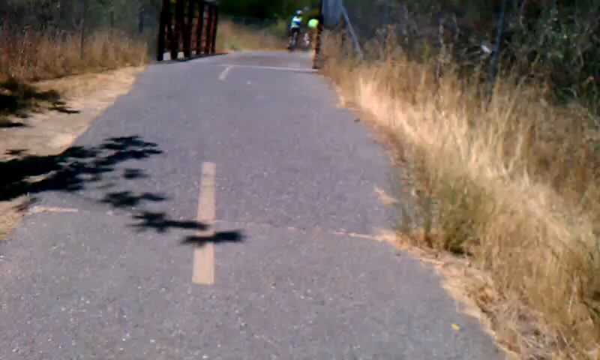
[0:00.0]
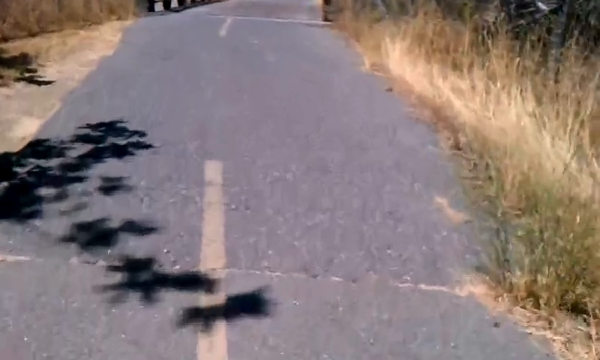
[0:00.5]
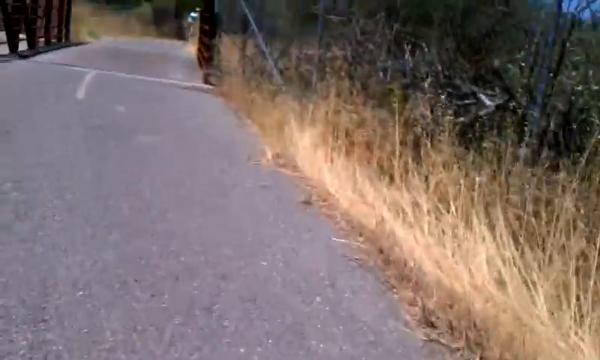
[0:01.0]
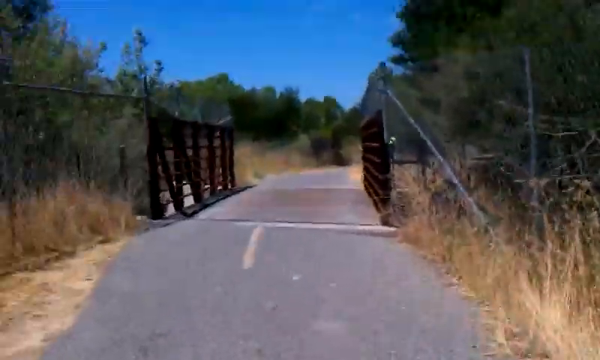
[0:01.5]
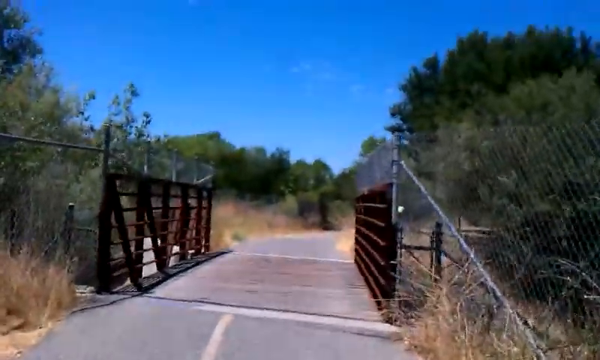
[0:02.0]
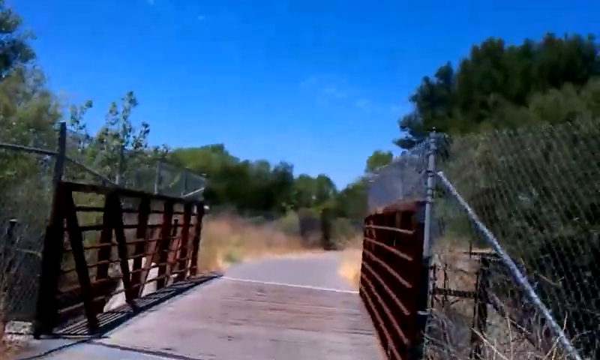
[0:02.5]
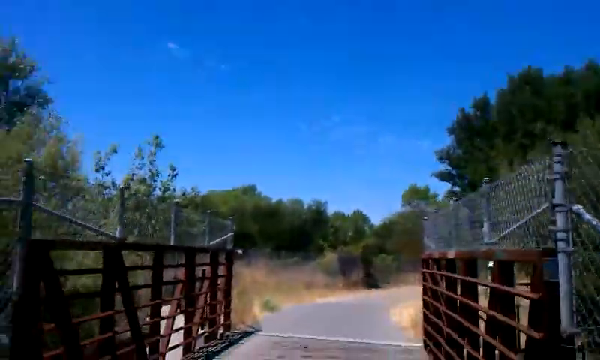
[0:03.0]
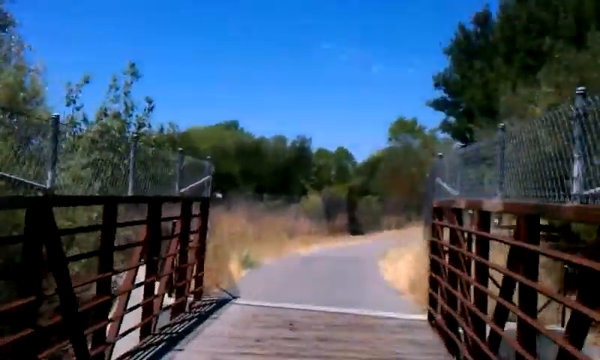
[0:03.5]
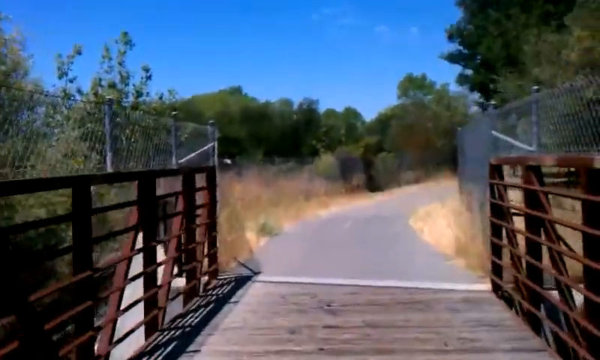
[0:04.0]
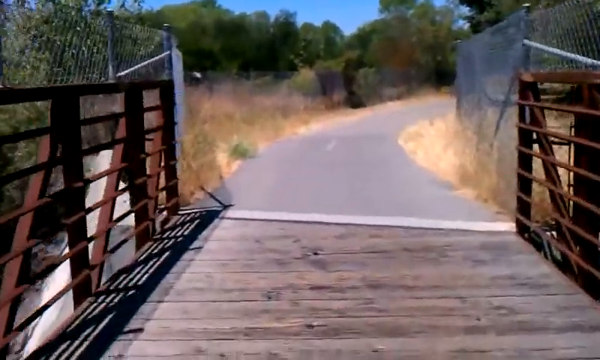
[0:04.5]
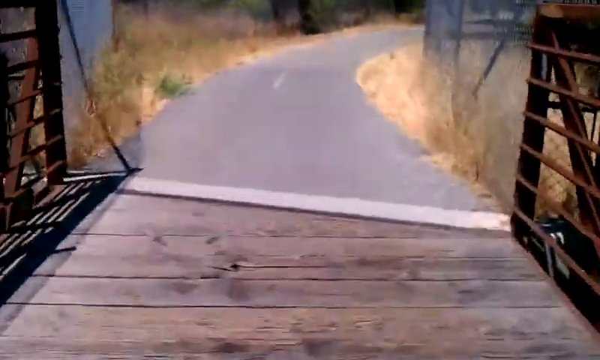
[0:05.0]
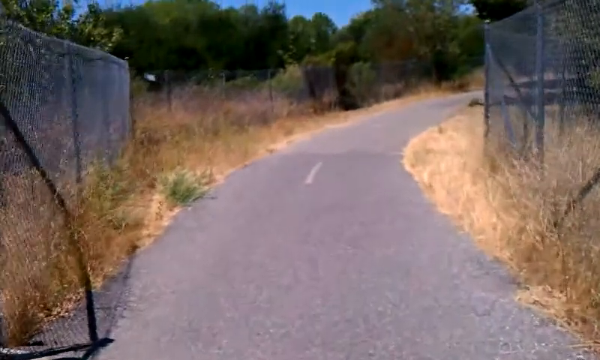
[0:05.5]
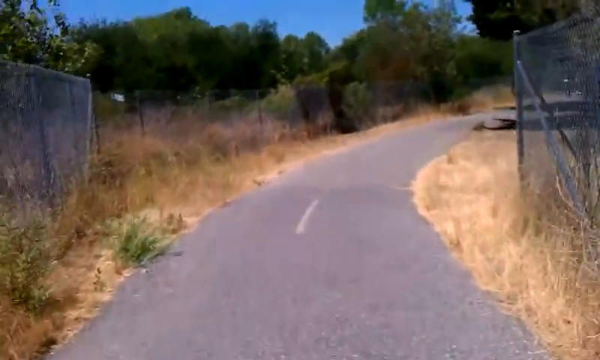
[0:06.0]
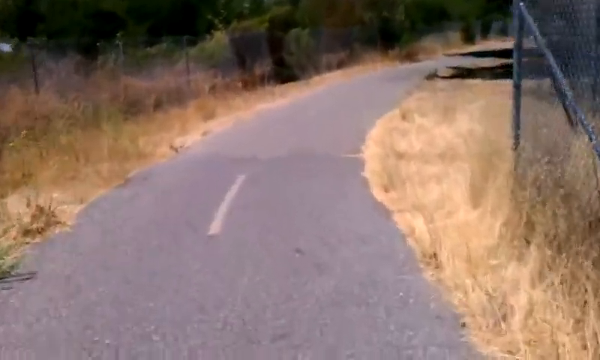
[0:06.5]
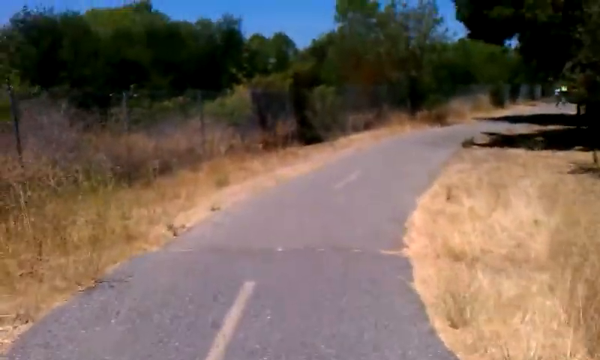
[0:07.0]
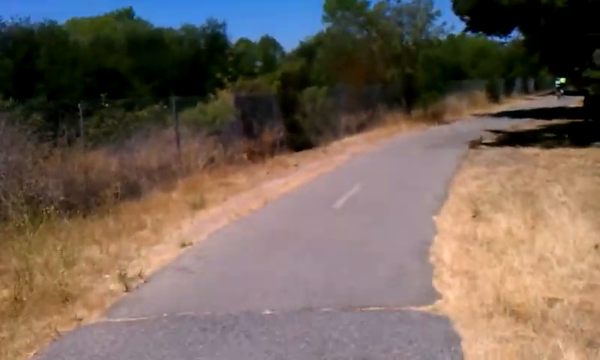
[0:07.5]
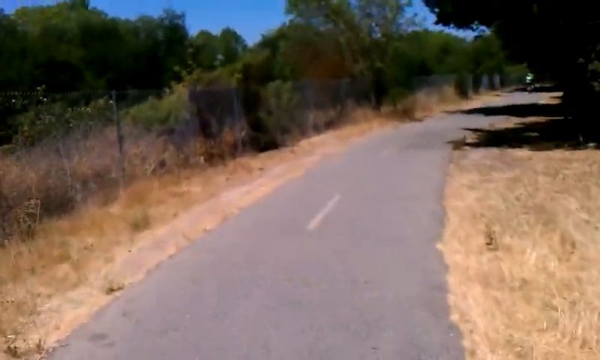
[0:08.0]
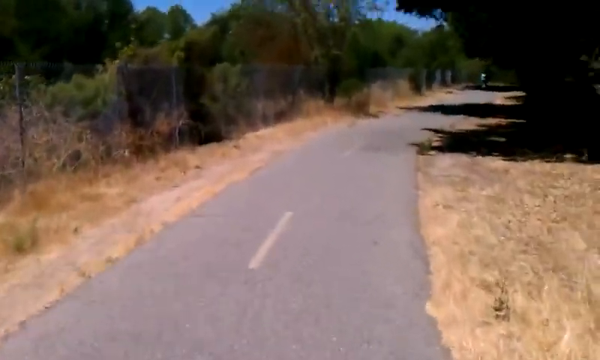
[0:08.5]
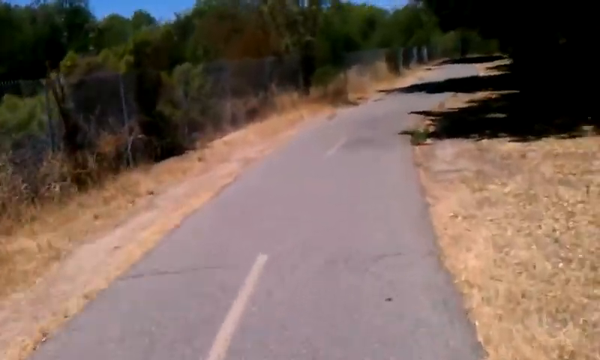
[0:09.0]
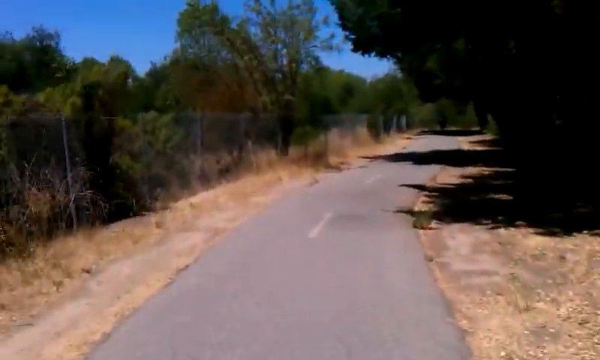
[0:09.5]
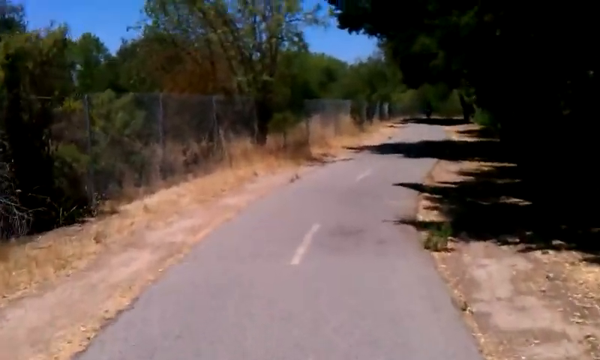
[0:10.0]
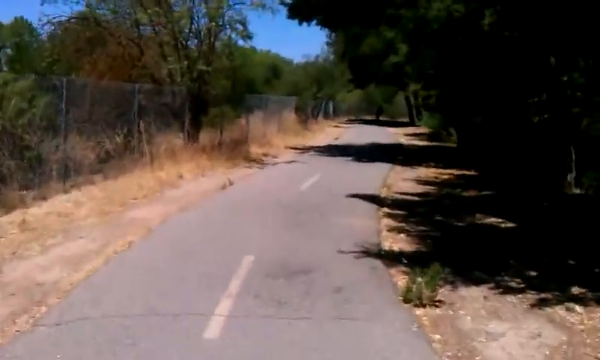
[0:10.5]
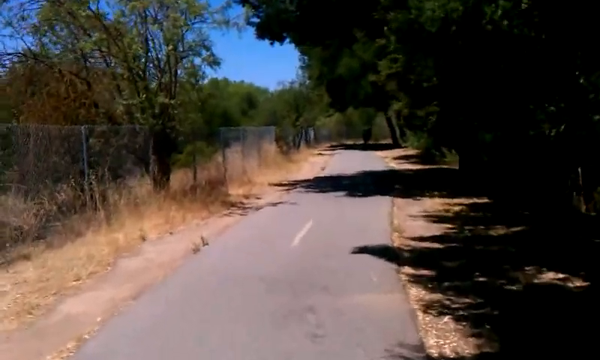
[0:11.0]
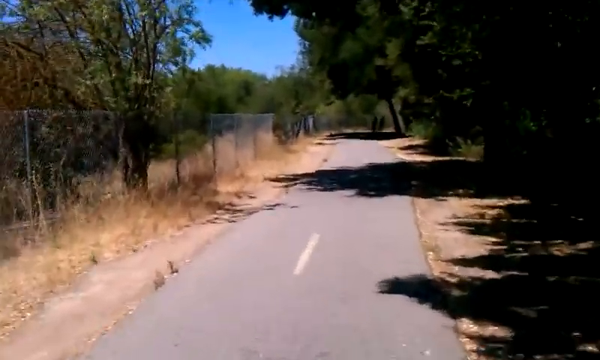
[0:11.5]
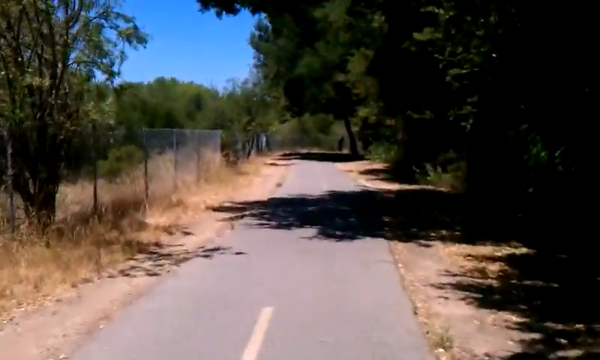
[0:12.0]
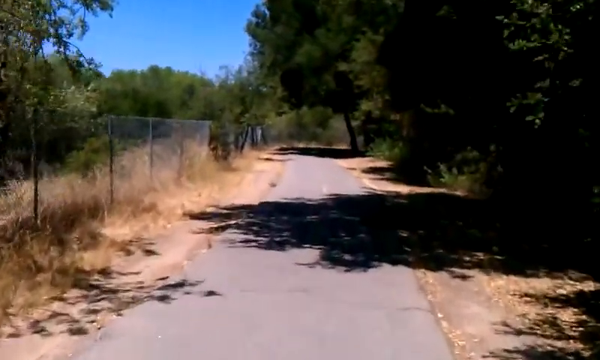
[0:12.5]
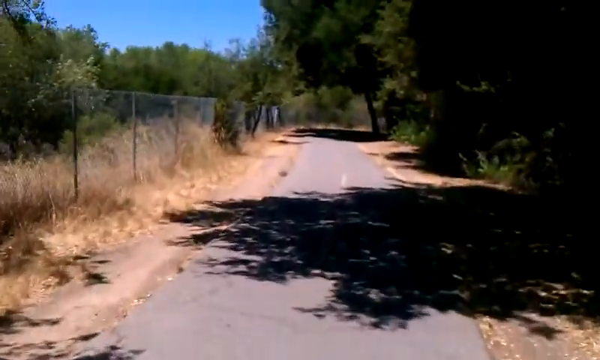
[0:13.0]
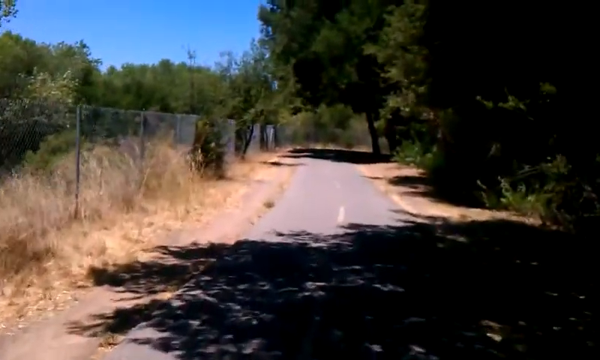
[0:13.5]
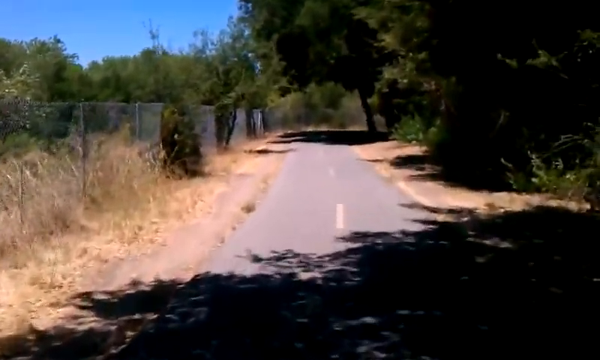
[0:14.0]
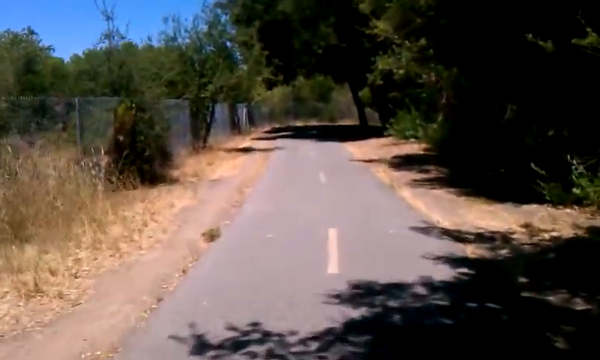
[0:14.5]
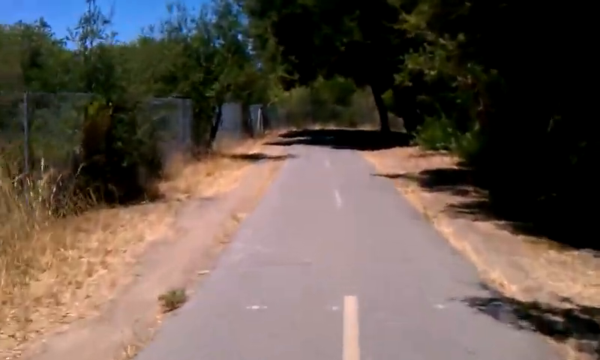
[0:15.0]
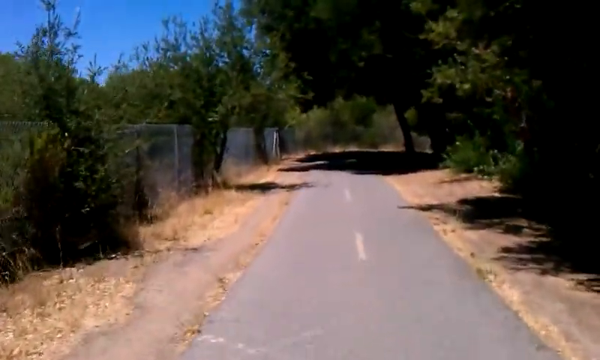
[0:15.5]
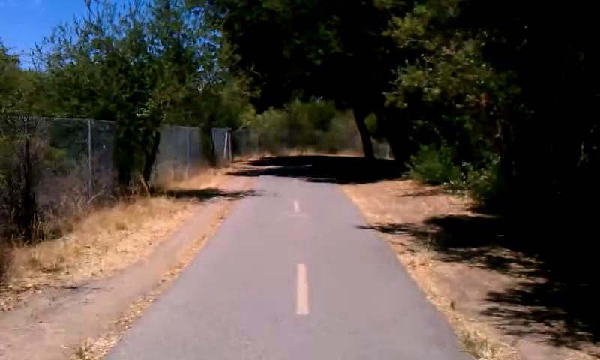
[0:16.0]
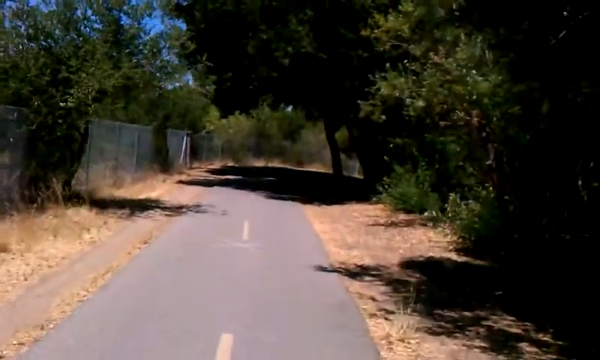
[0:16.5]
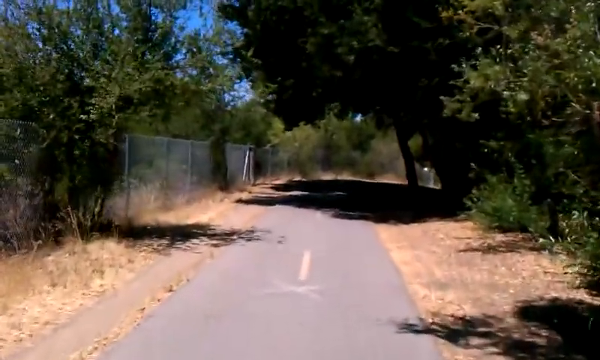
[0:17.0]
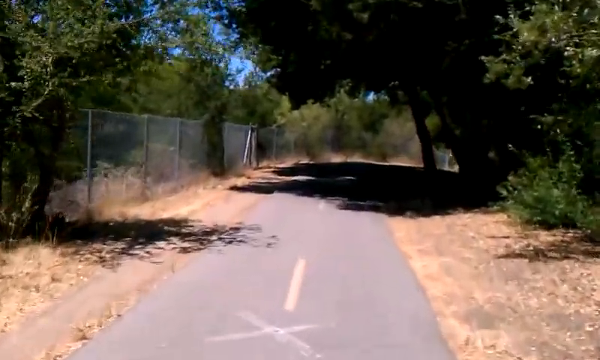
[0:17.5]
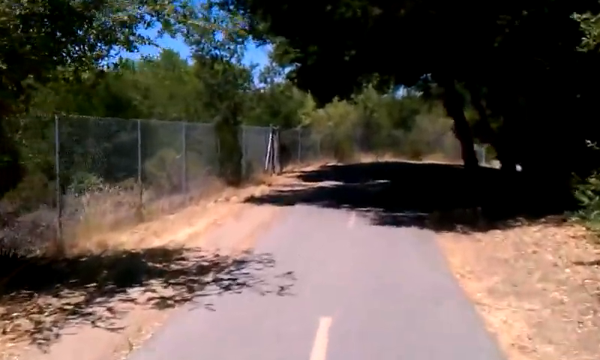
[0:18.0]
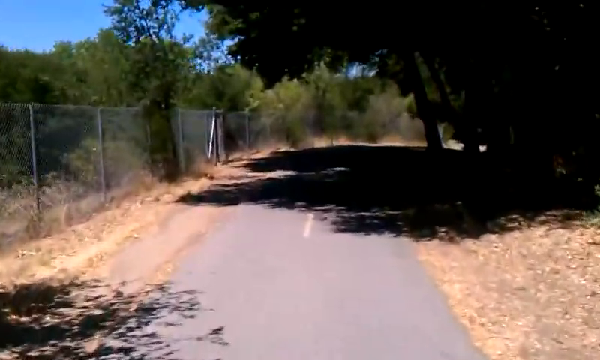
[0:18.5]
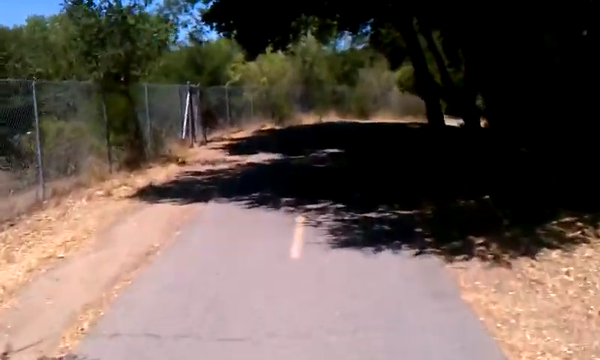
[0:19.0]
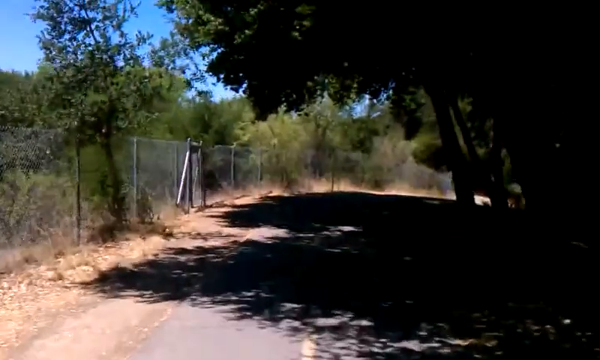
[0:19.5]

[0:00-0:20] A gray road appears to be a bit cracked in the bottom area, with tall brown grass or weeds on either side and a faded white line of spaced-out dashes in the middle. The person moves toward what looks like a small bridge with dark brown and reddish railing and a wooden path going over the open area. The view then runs along, passing trees on either side, with a gray metal chain-link fence to the left. A white-lined road separator divides the left and right lanes. The sky is clear with no clouds above the green trees on the left, and bright sunlight shines along the roadway where the person is traveling.